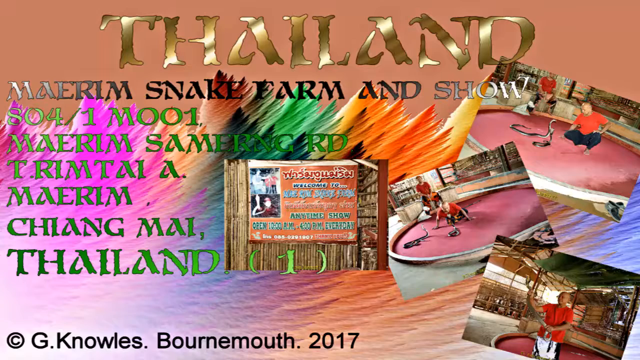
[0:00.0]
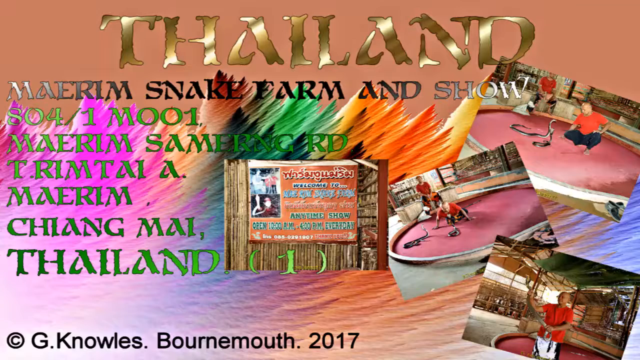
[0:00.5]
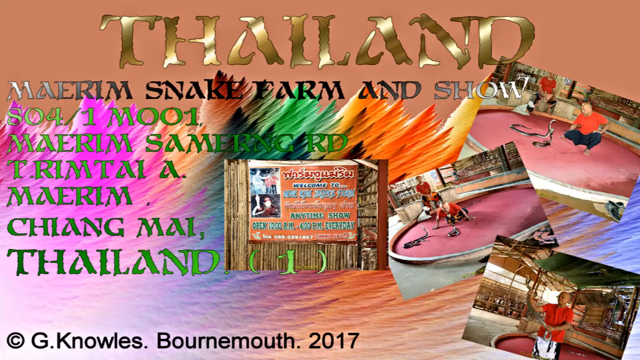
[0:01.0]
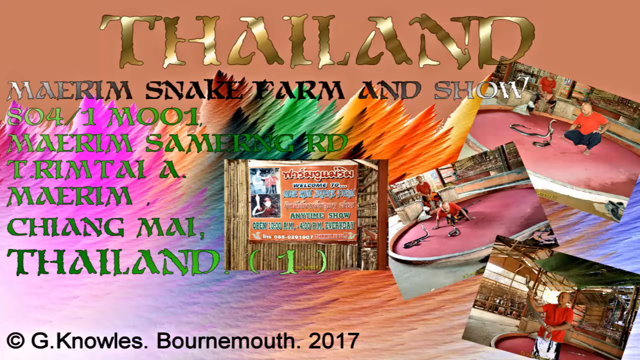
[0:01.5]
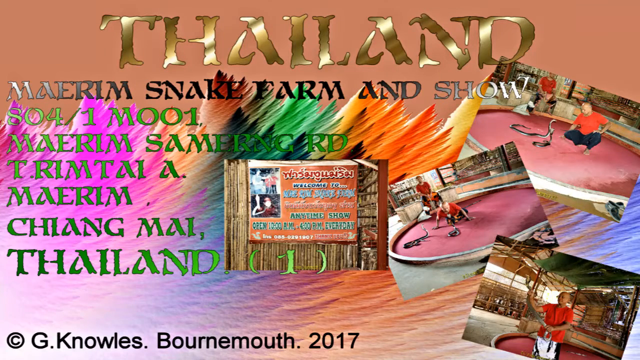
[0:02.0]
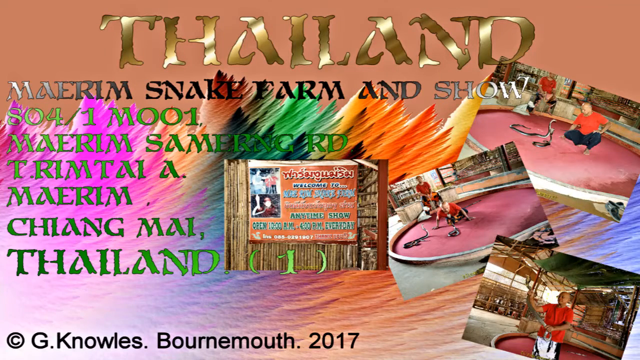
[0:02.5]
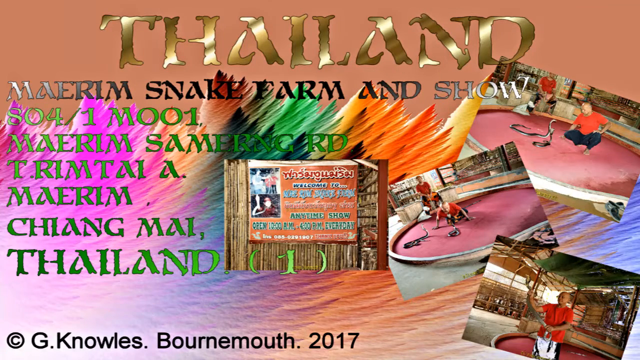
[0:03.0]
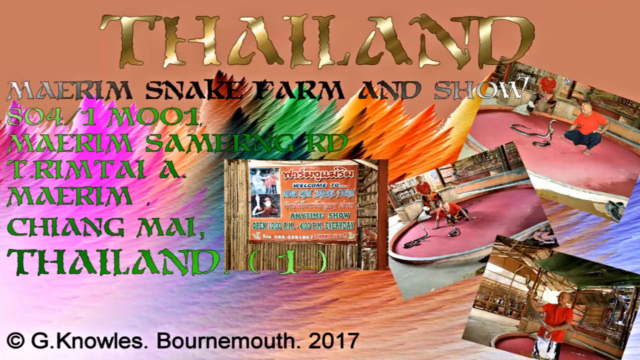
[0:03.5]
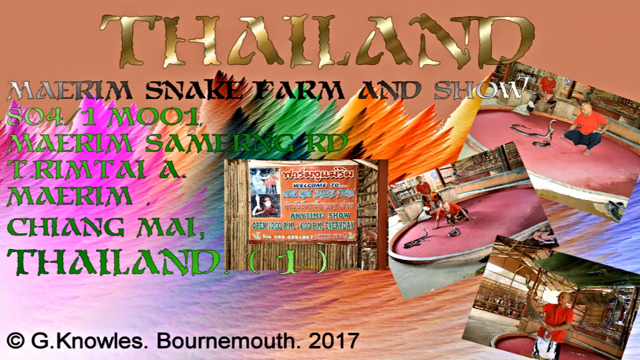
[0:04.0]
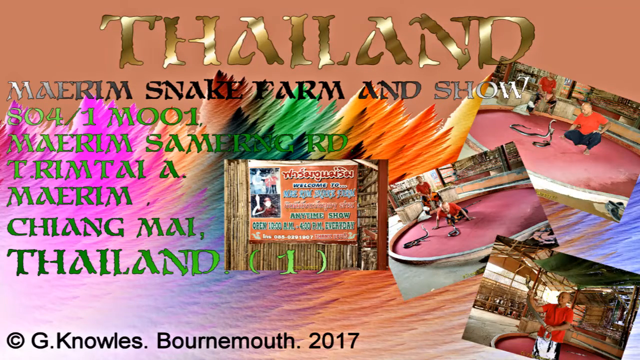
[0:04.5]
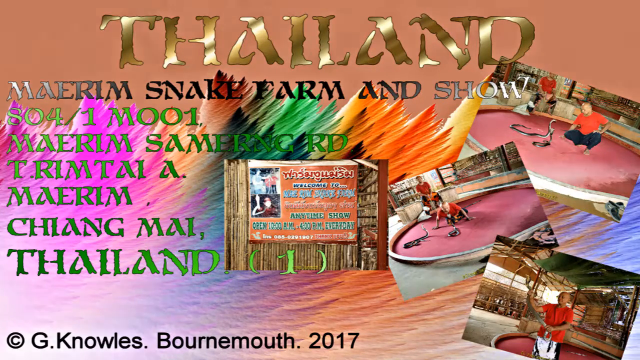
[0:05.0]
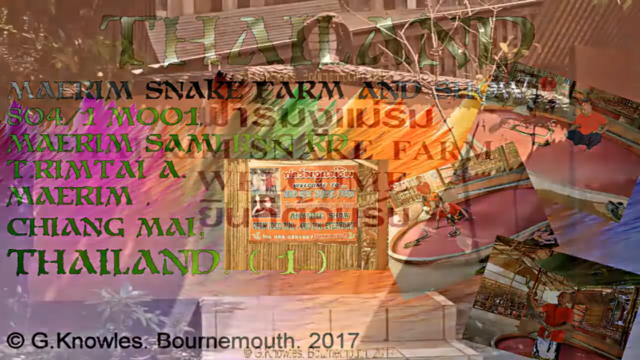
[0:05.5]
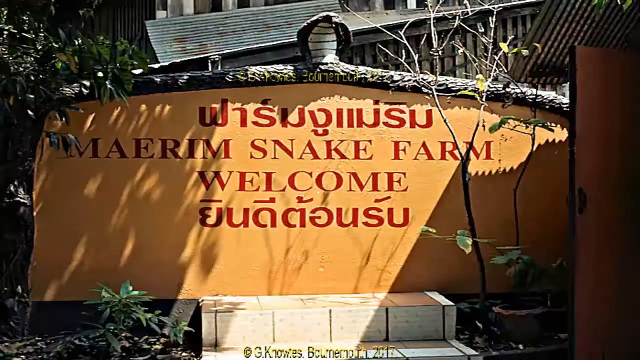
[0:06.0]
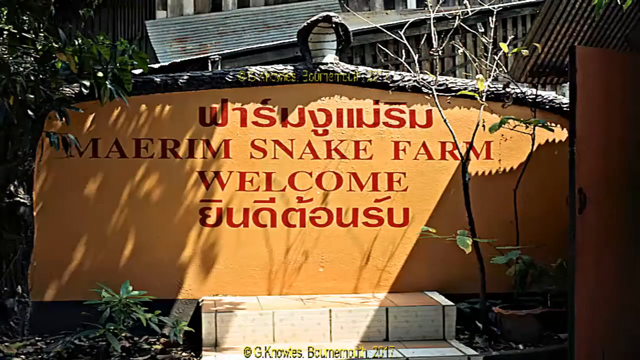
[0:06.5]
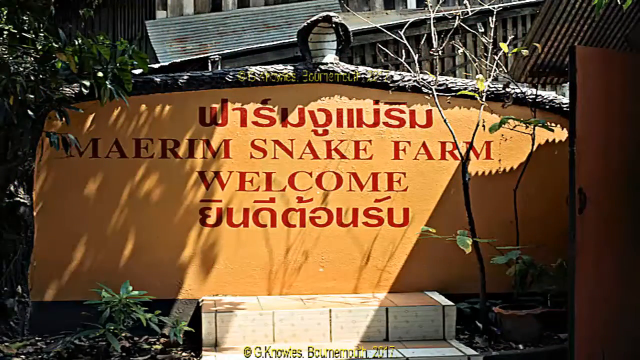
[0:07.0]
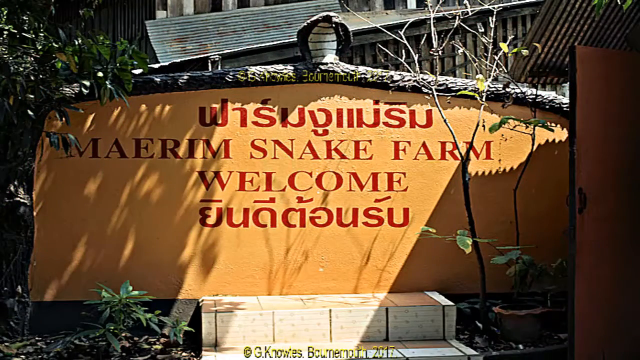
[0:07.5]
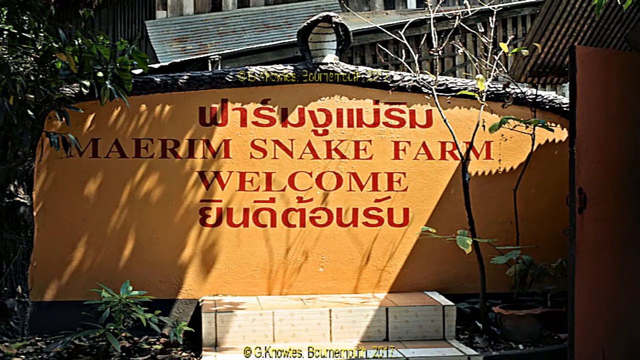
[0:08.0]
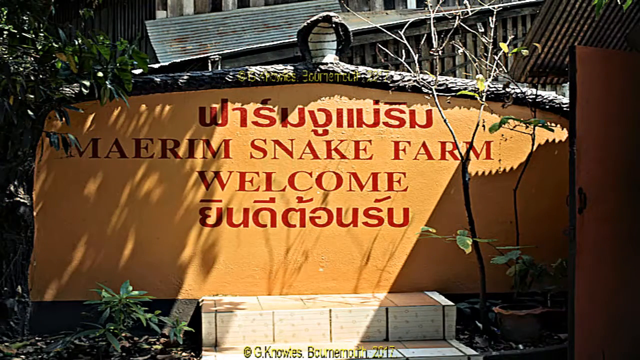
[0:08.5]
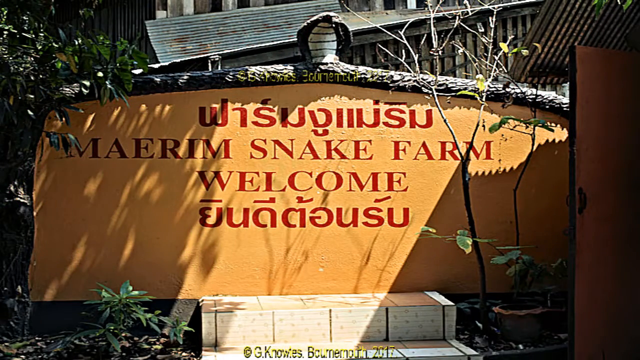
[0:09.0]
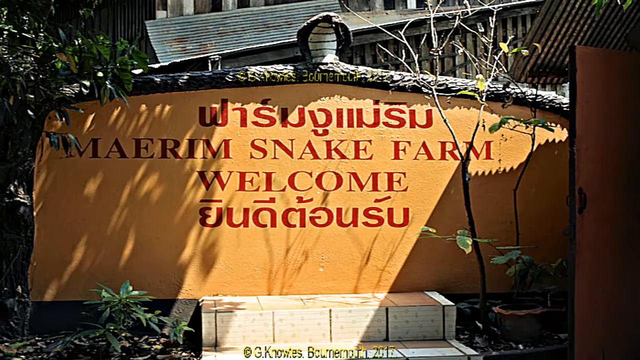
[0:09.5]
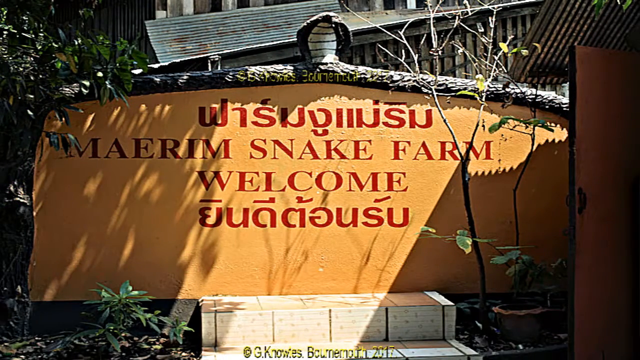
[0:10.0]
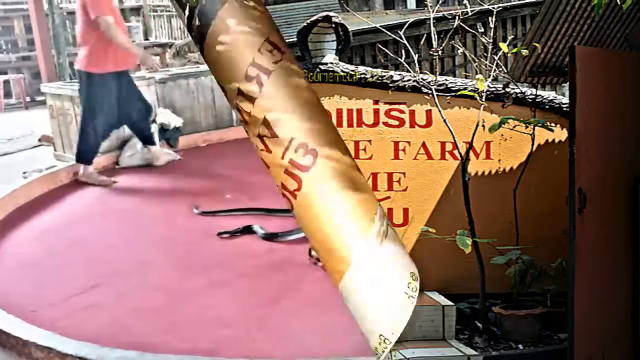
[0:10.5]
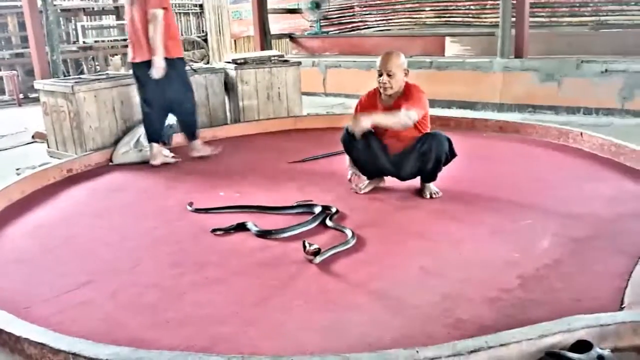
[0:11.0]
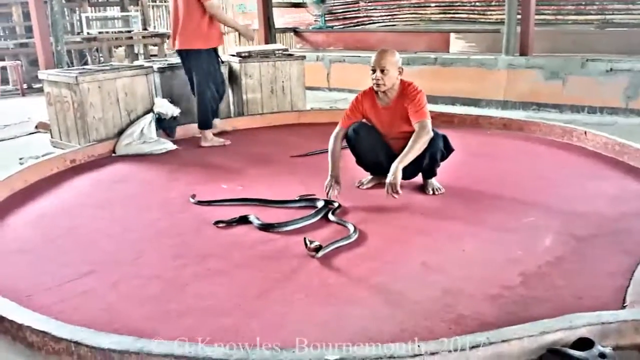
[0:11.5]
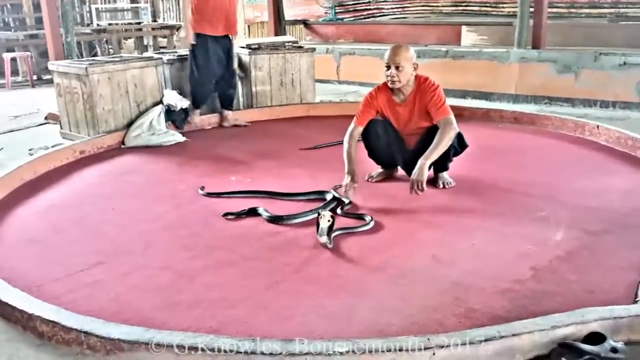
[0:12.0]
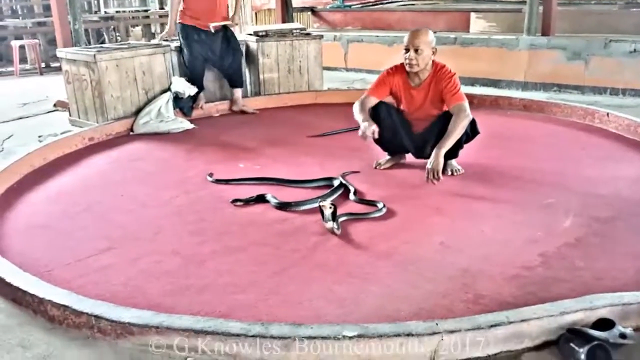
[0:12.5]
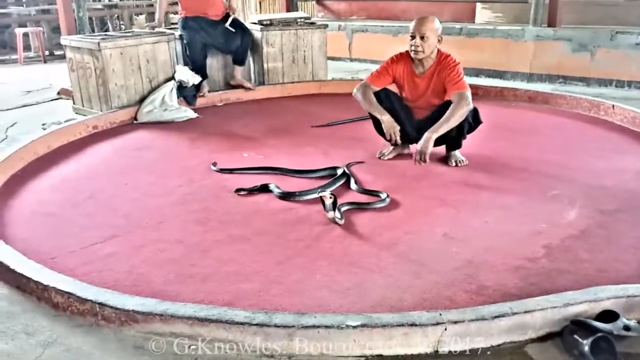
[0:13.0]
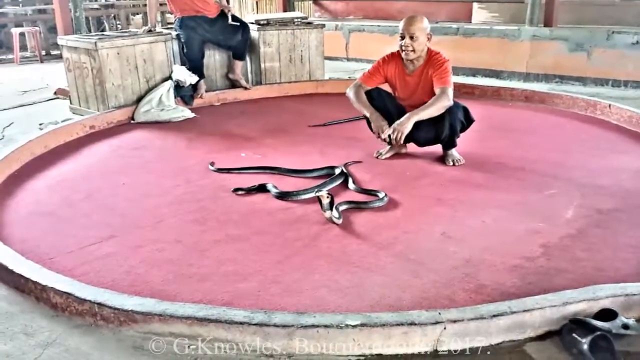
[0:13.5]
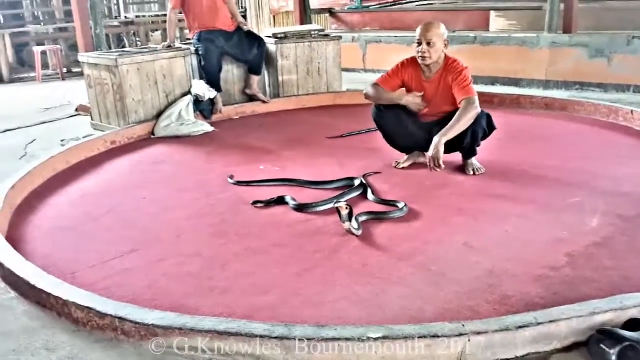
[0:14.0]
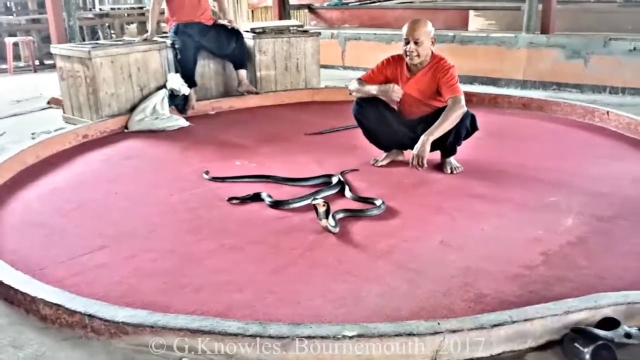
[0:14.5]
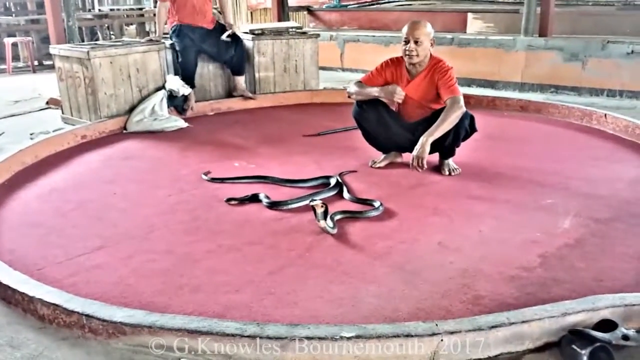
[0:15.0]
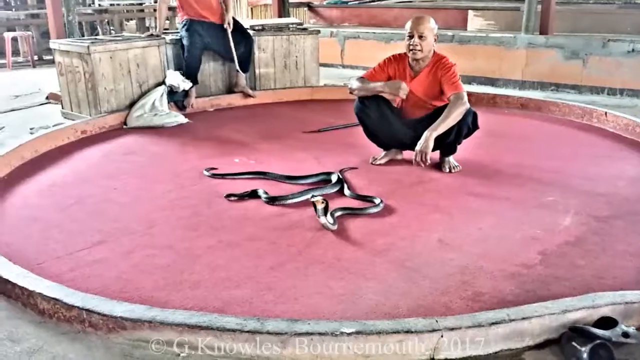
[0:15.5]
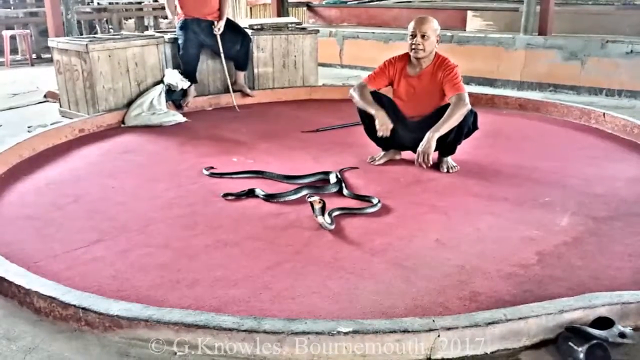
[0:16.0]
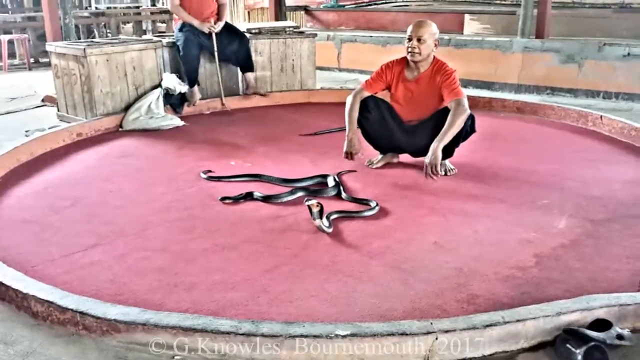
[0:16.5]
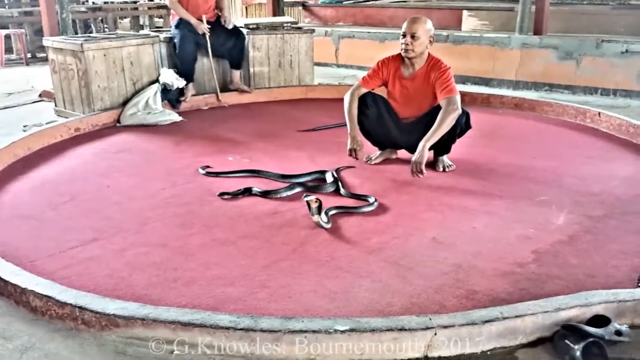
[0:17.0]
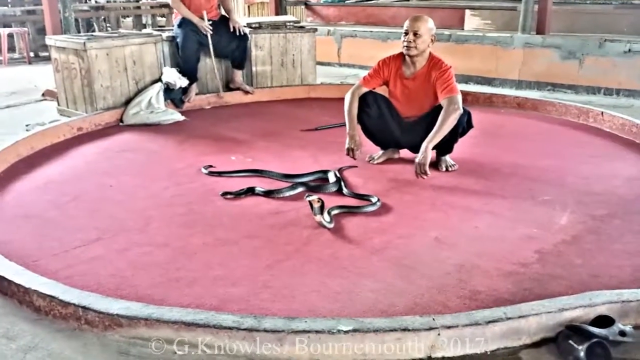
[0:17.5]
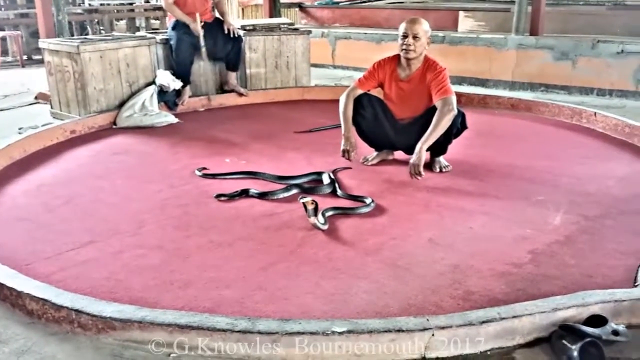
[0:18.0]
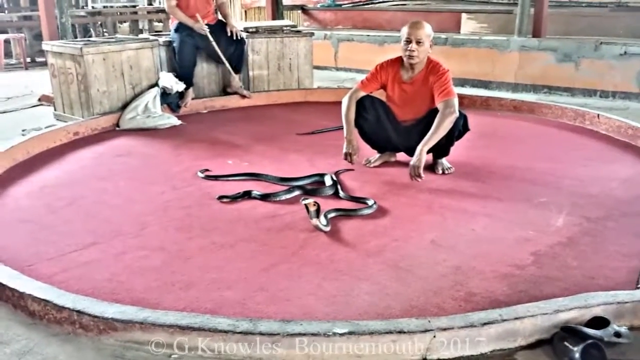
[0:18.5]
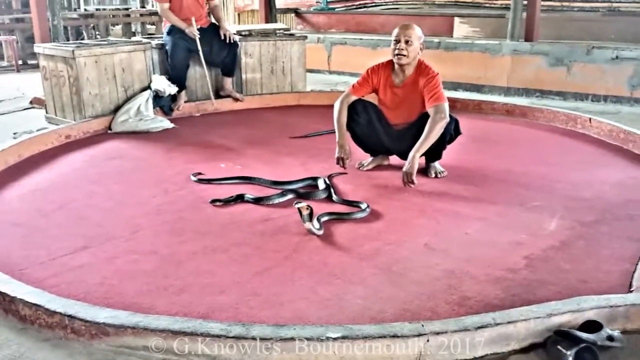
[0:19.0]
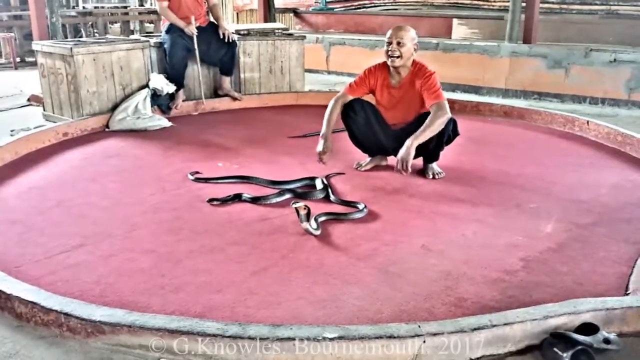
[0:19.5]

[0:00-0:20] What looks like a collage of photos fills the screen, with gold text at the top that says "Thailand, Merrim Snake Farm and Show." Some of the text appears to be in a foreign language, and the show appears to be in Thailand. Four collaged pictures show a man in orange squatting with two snakes next to him. A sort of rainbow feathered look runs across most of the screen, against a neutral brownish-orange background. The images change with fading gradients and a sort of paper-roll effect. The second image shows a yellow sign in a sort of forested area that says "Merrim Snake Farm Welcome," with foreign text above and below it. These are static images with no movement. Next comes video of two men wearing orange-reddish shirts with snakes around them; the snakes look like some sort of vipers.